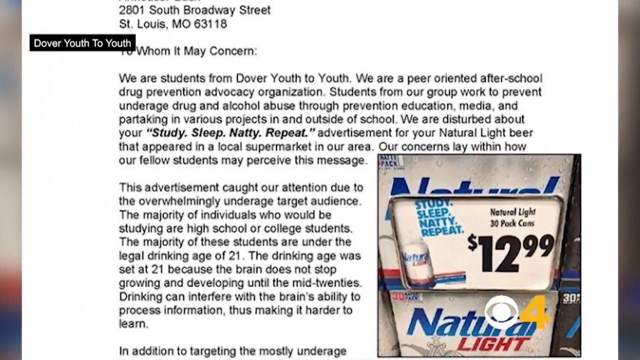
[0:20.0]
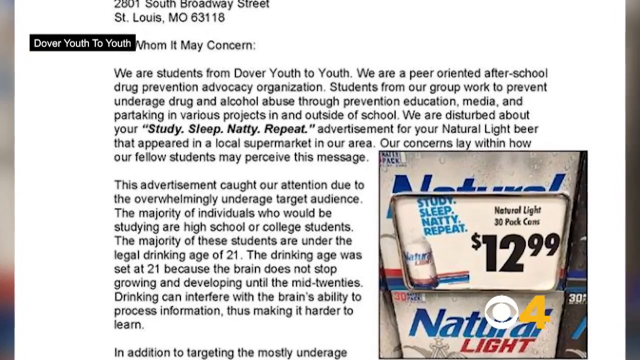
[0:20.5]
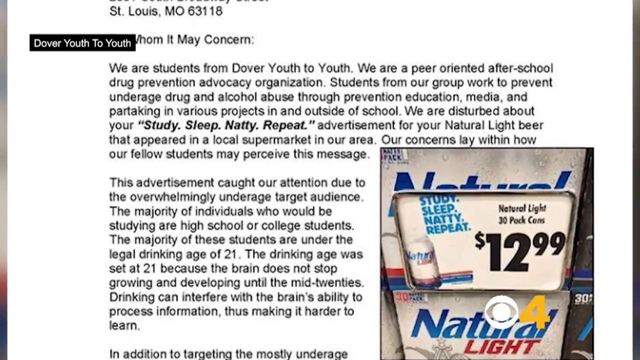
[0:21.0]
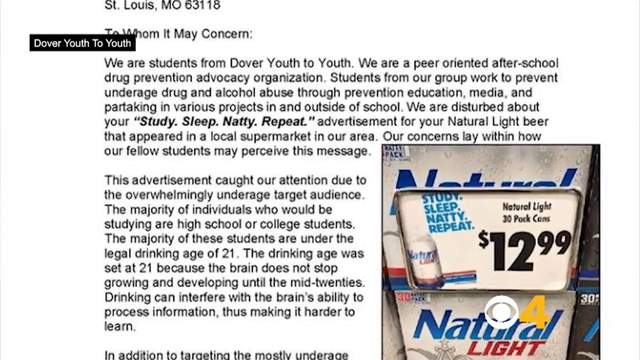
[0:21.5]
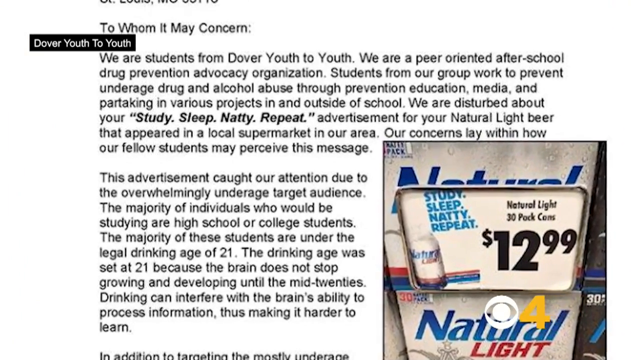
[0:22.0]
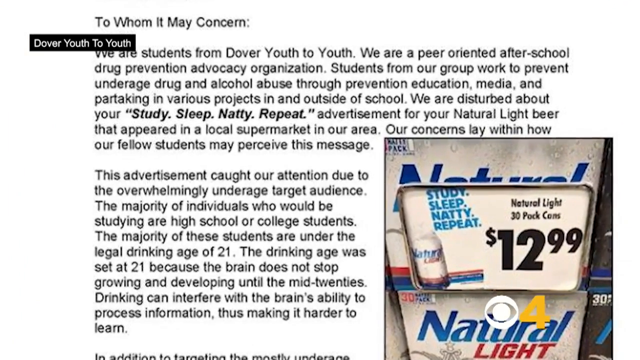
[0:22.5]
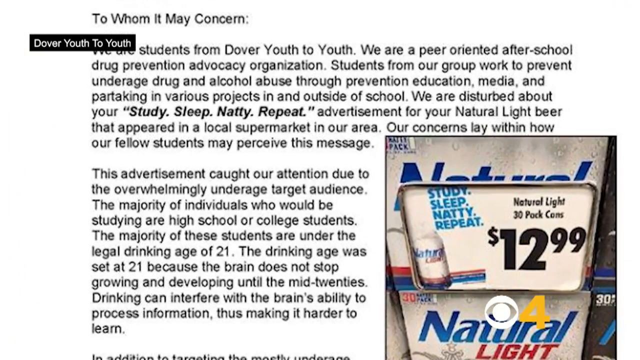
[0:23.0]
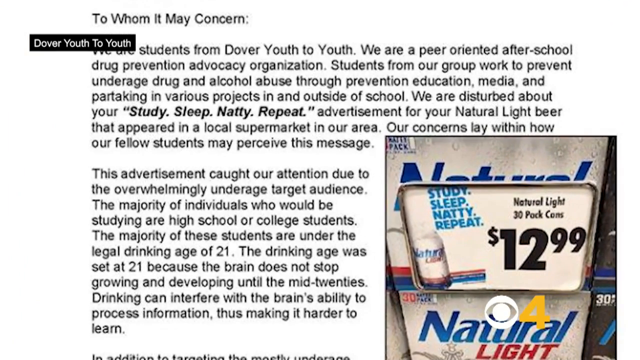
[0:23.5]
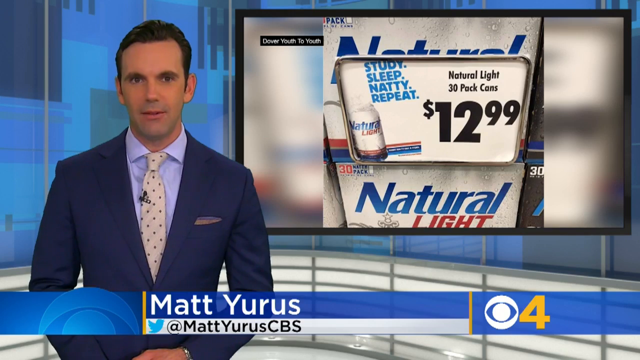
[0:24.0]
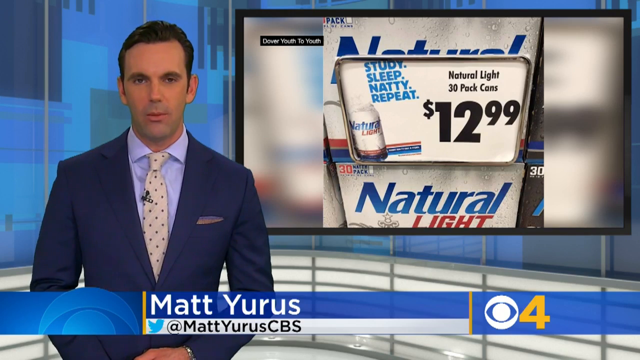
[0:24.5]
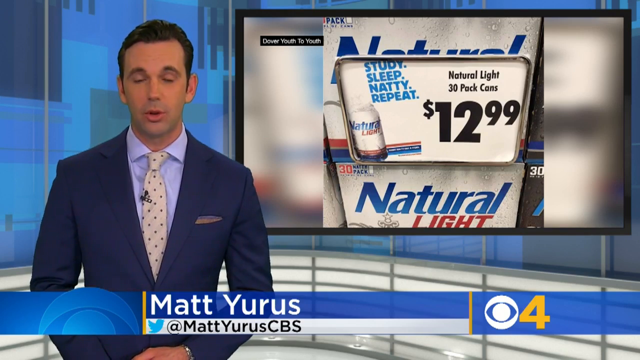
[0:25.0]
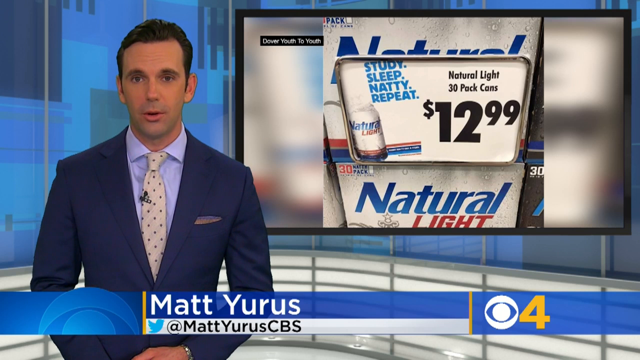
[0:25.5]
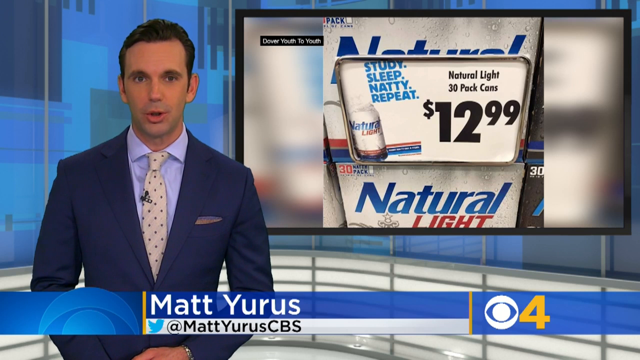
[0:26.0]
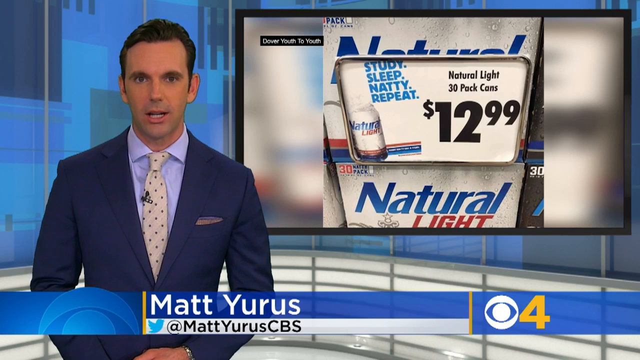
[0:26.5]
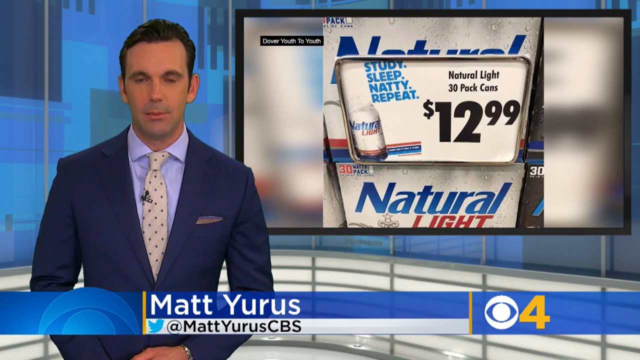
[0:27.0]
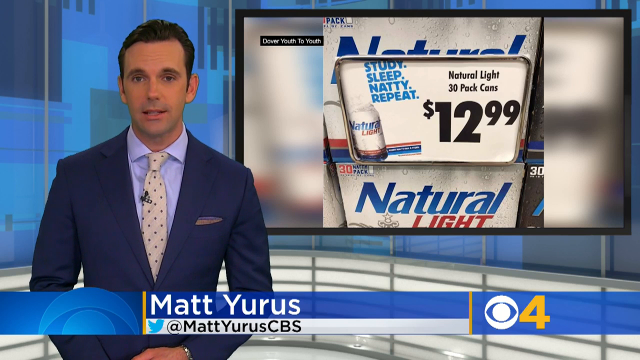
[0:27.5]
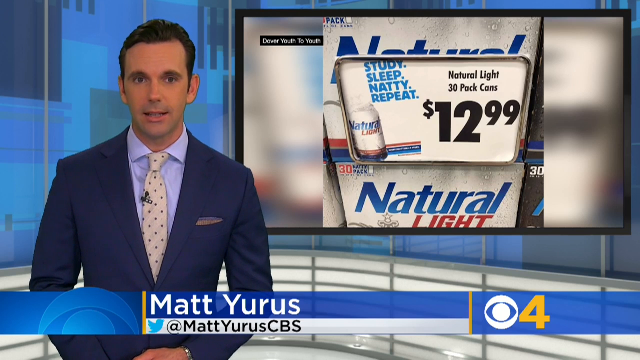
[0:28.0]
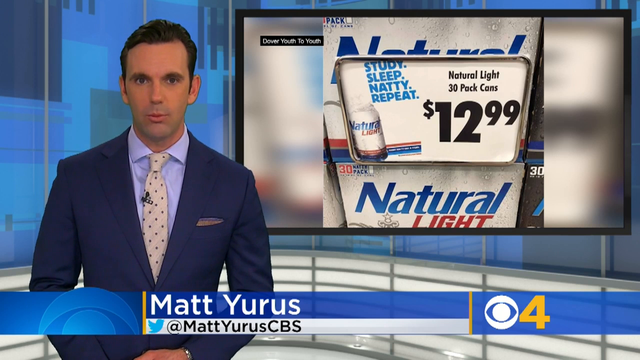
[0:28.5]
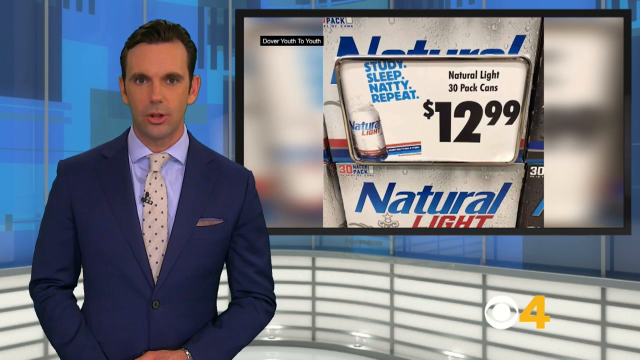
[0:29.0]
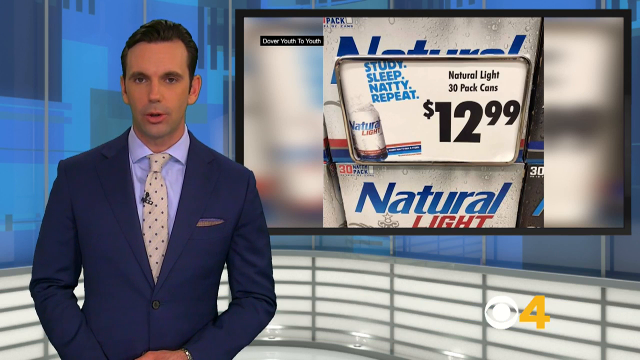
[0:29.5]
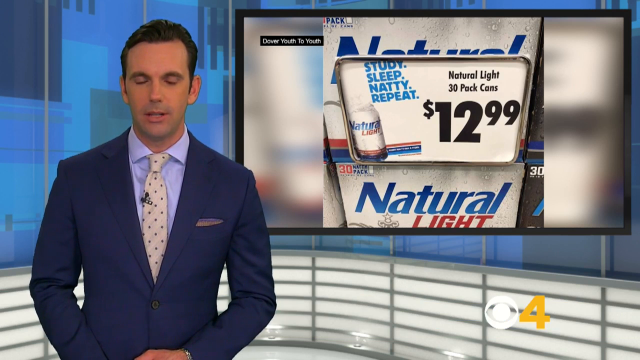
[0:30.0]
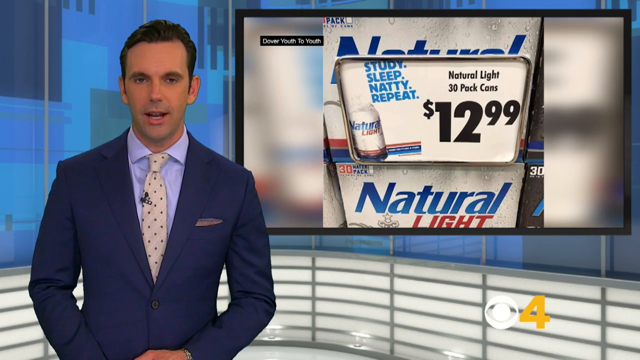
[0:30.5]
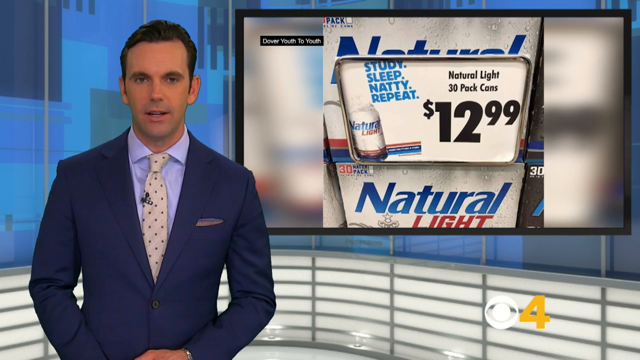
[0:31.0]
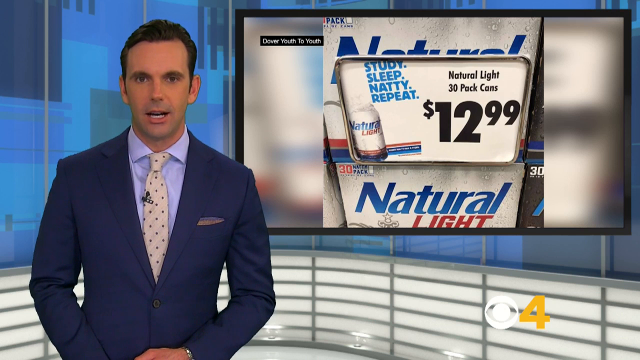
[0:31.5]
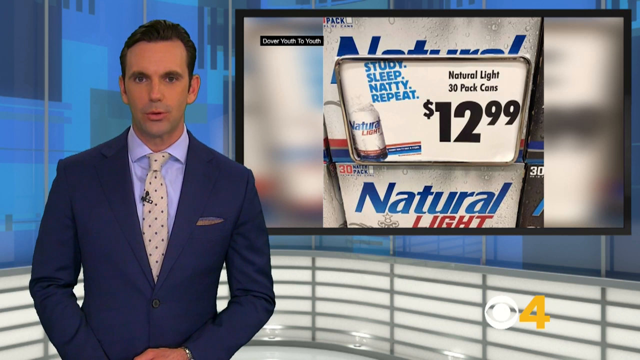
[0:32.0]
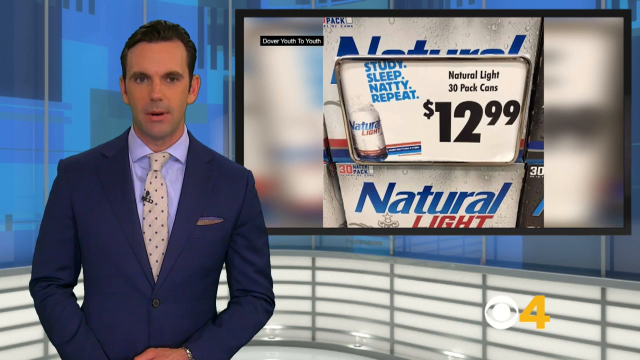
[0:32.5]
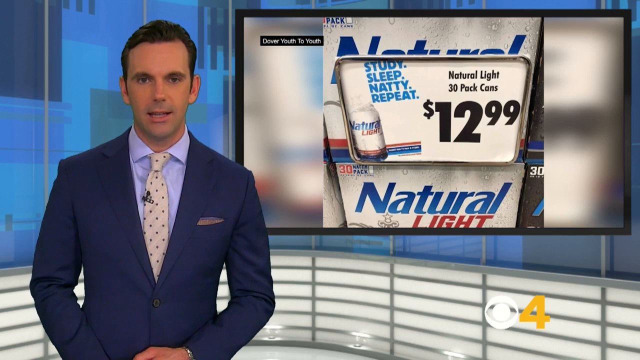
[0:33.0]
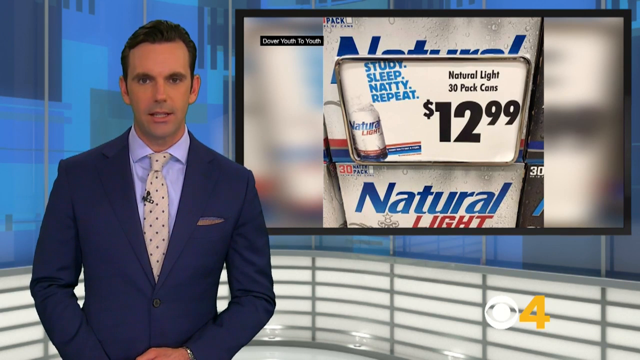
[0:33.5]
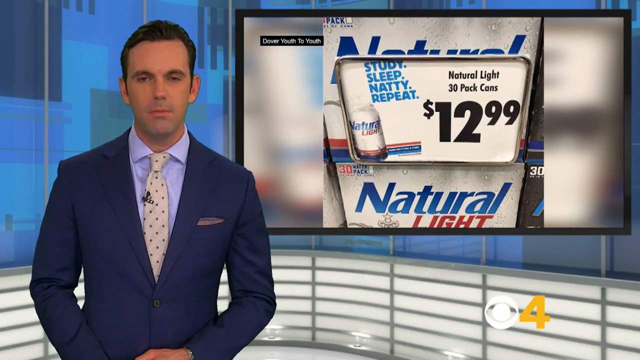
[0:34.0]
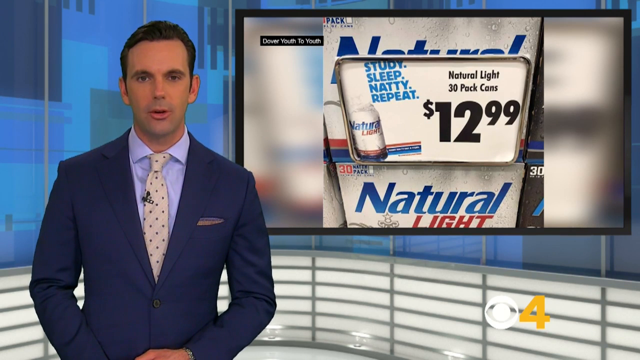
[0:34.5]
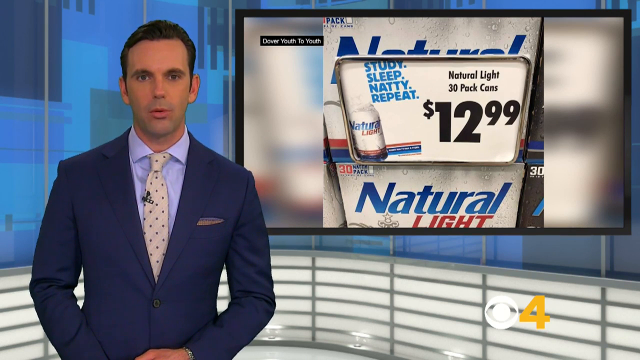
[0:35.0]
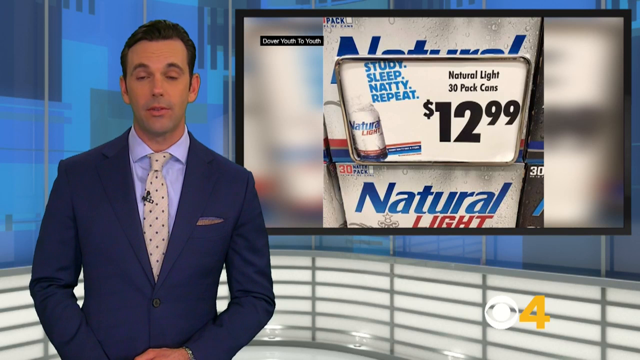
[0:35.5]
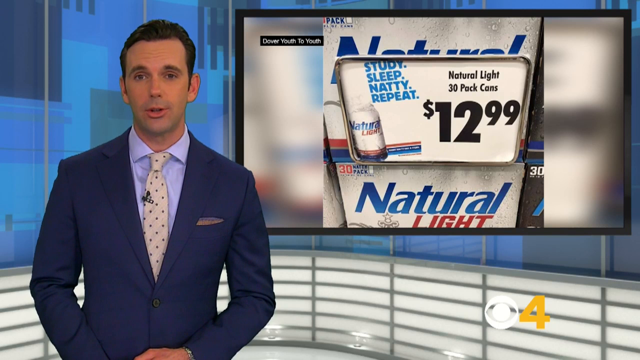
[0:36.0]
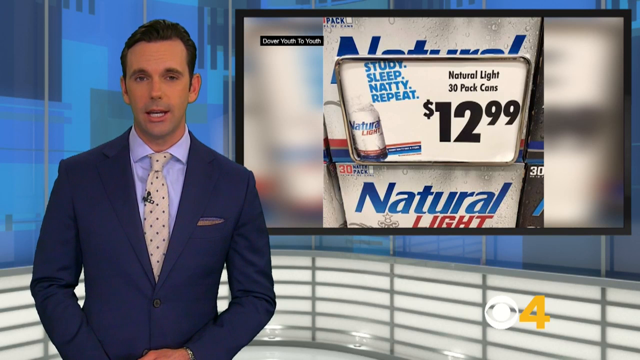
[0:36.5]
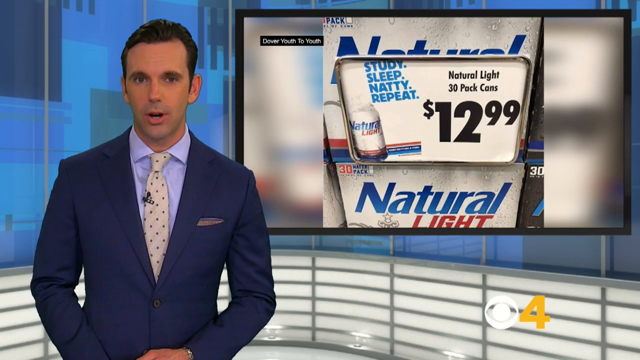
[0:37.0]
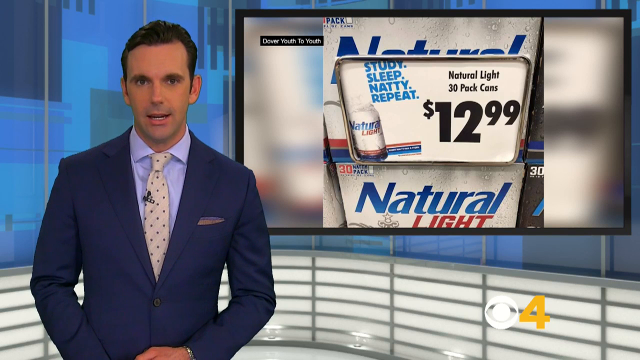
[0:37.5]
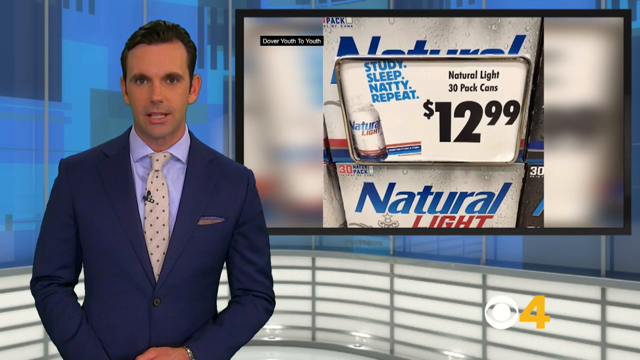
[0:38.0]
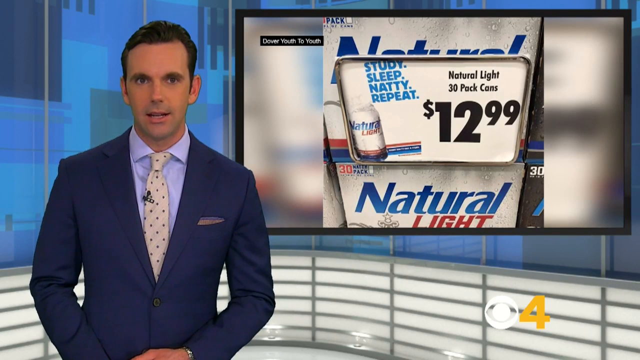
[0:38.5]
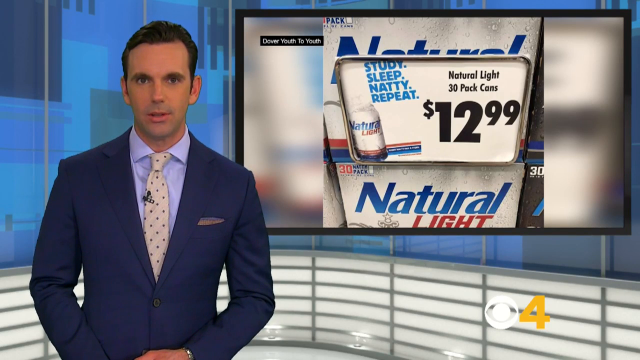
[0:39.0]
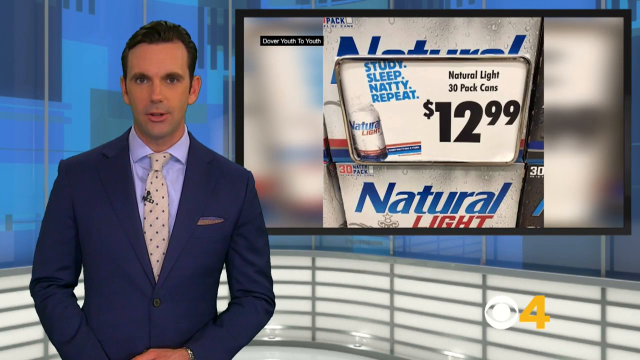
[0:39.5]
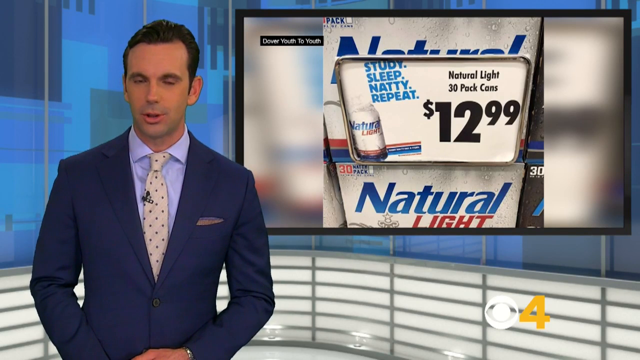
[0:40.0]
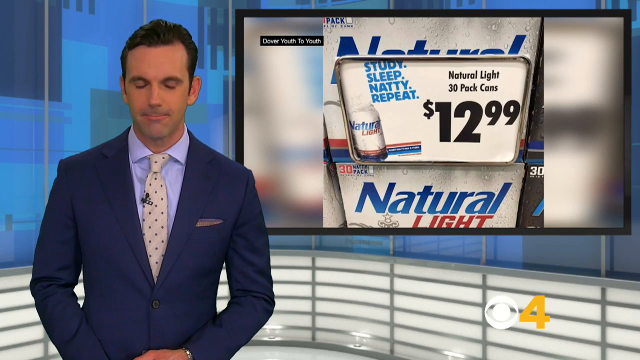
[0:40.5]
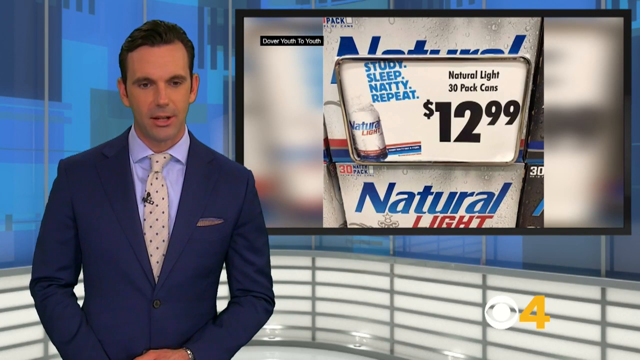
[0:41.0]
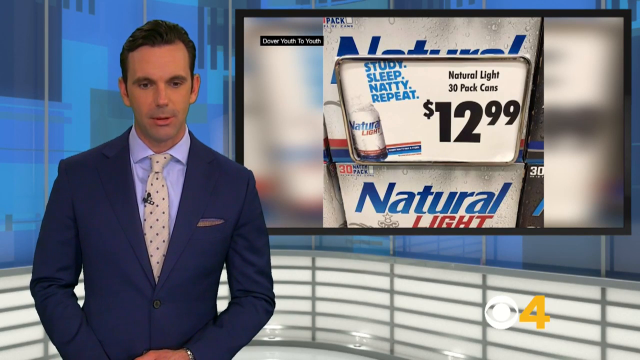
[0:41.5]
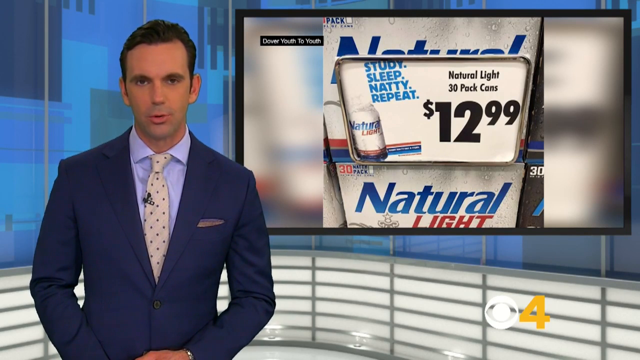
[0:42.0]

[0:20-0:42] Matt, a presenter for the station, delivers the news. Text reads: "the advertisement caught our attention due to the overwhelming underage target audience."